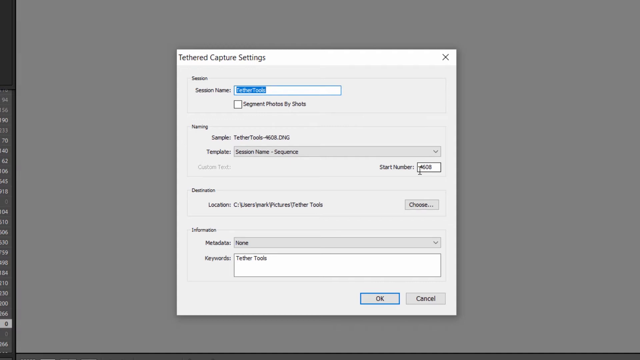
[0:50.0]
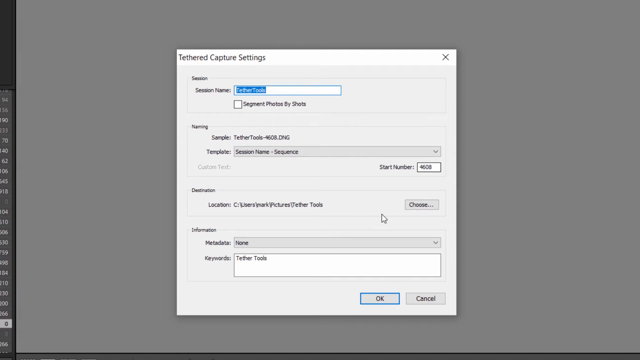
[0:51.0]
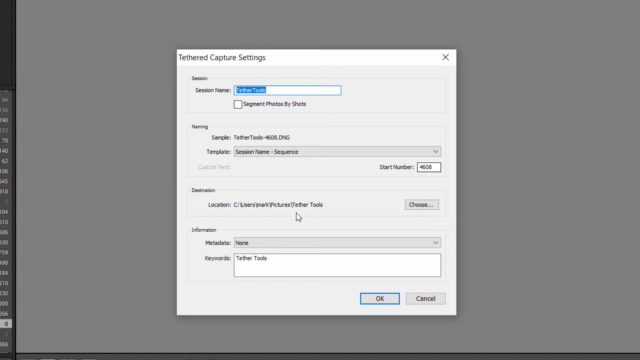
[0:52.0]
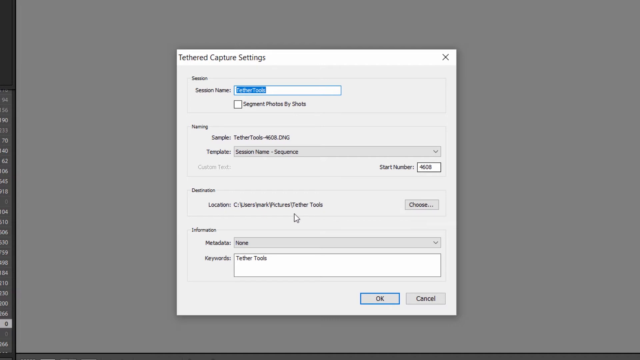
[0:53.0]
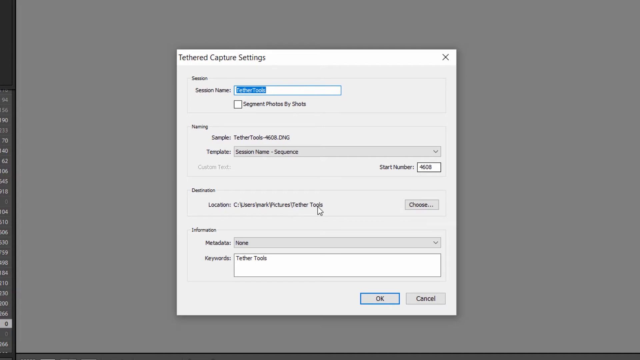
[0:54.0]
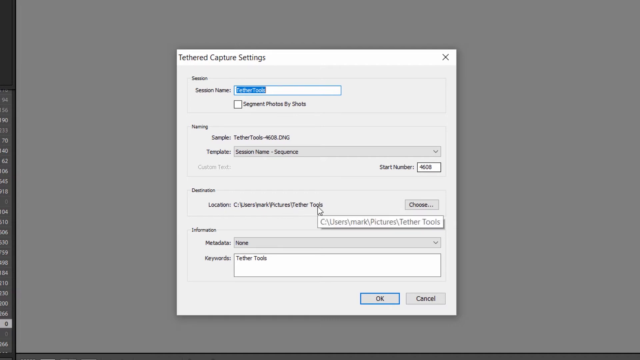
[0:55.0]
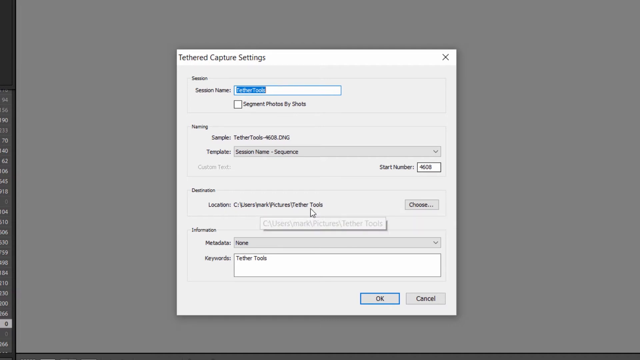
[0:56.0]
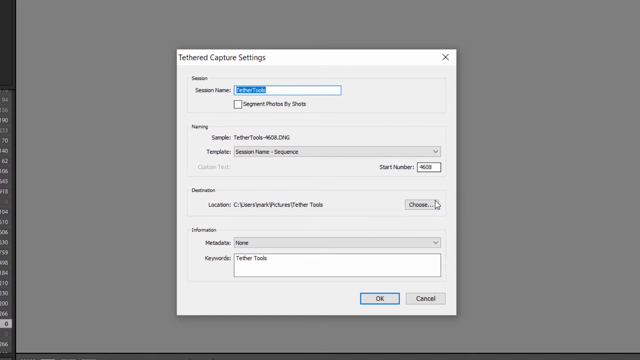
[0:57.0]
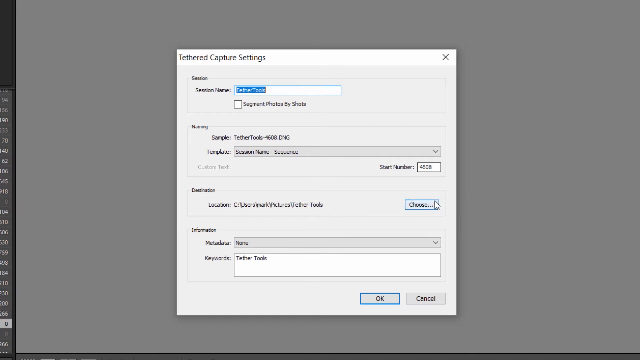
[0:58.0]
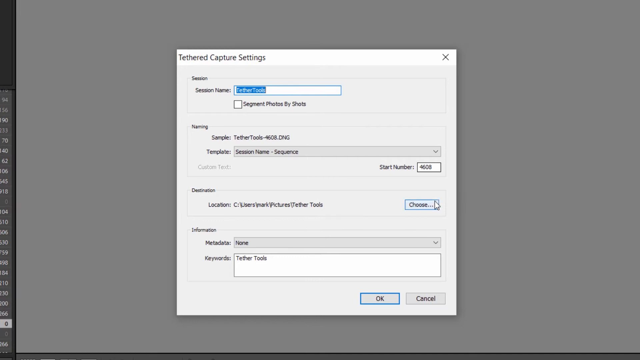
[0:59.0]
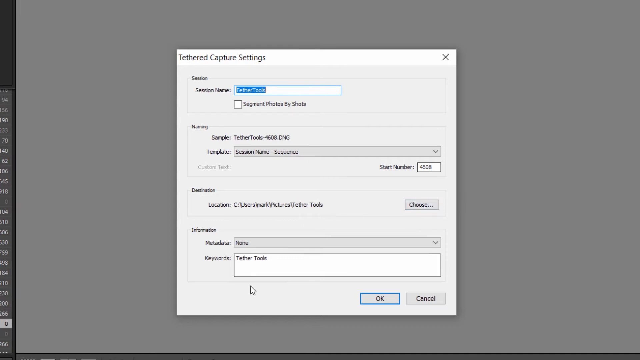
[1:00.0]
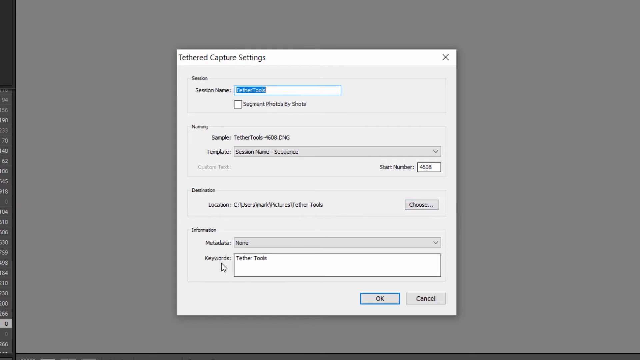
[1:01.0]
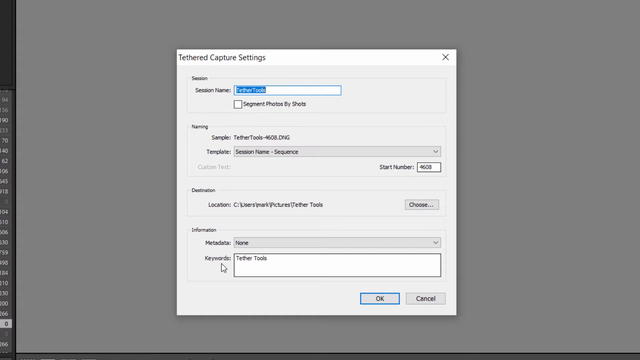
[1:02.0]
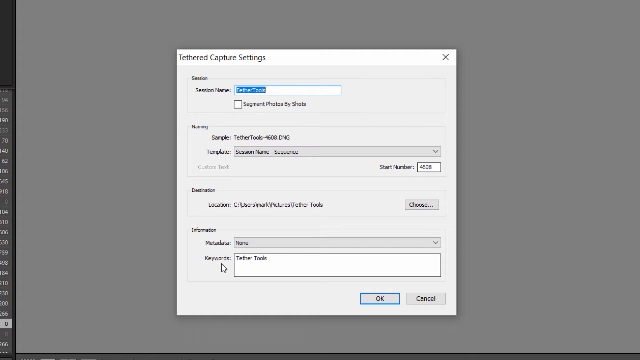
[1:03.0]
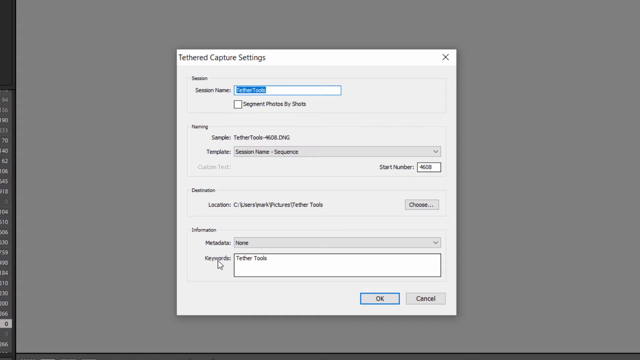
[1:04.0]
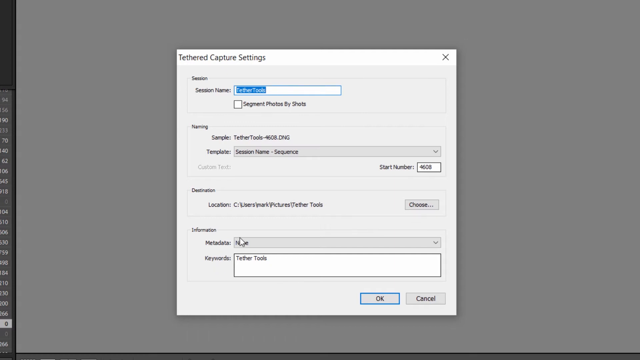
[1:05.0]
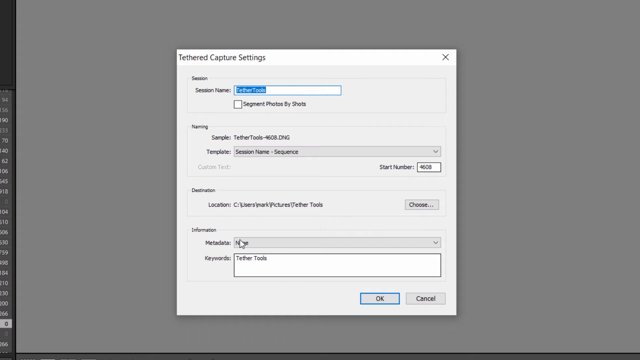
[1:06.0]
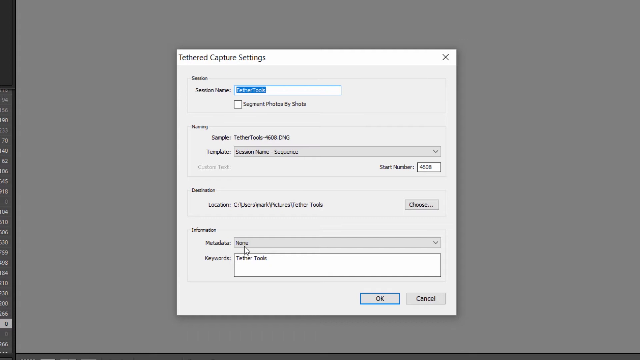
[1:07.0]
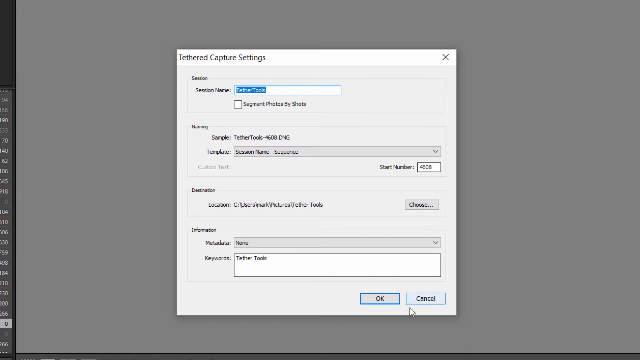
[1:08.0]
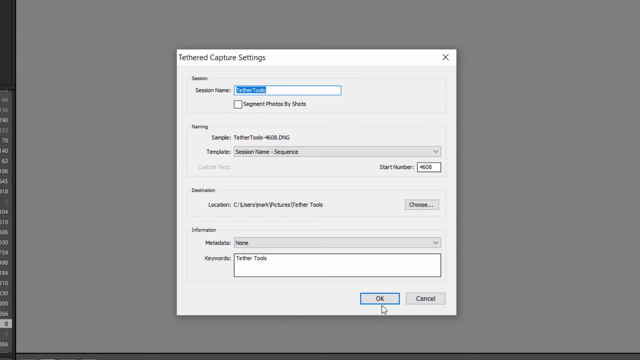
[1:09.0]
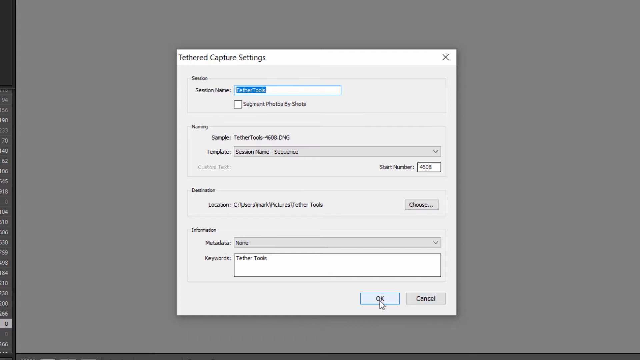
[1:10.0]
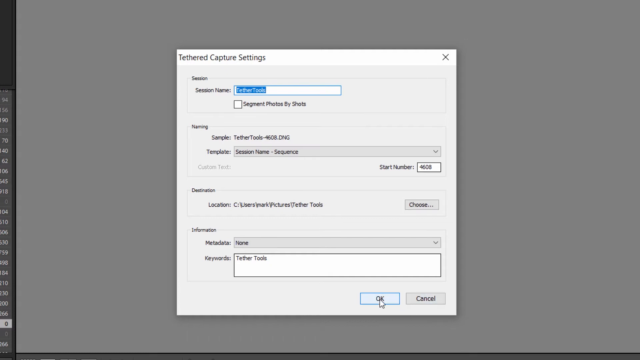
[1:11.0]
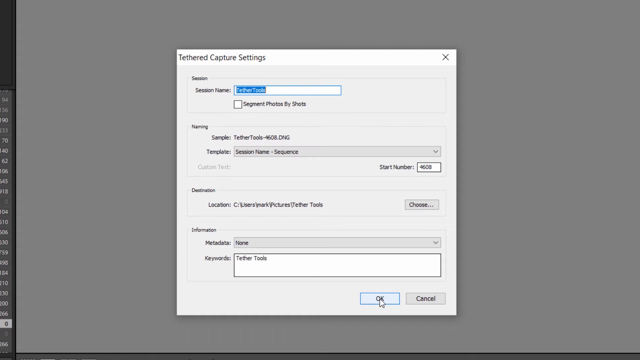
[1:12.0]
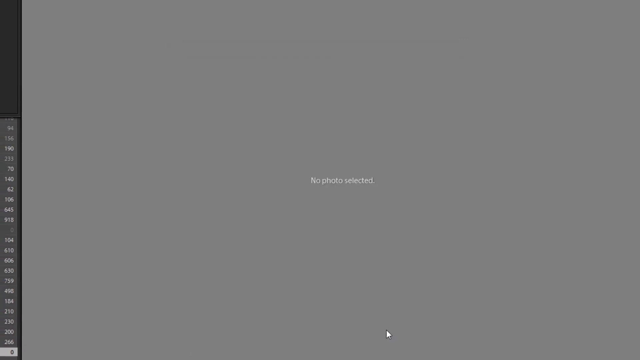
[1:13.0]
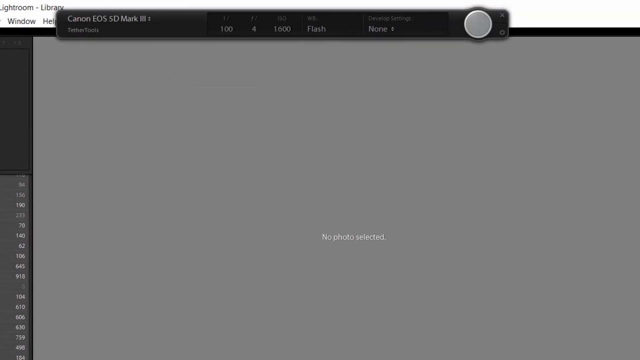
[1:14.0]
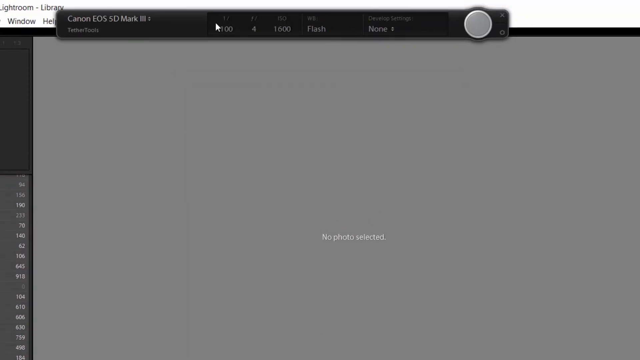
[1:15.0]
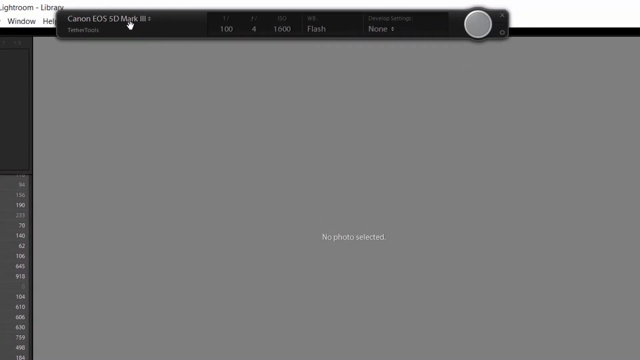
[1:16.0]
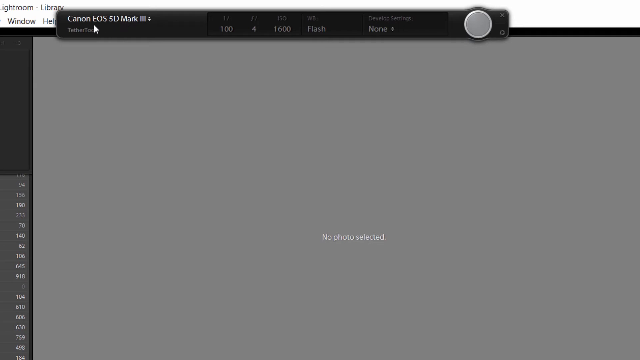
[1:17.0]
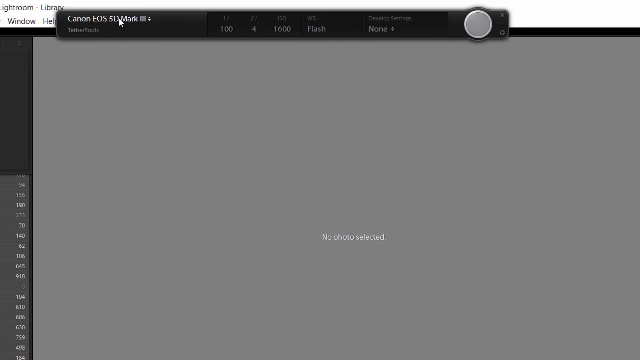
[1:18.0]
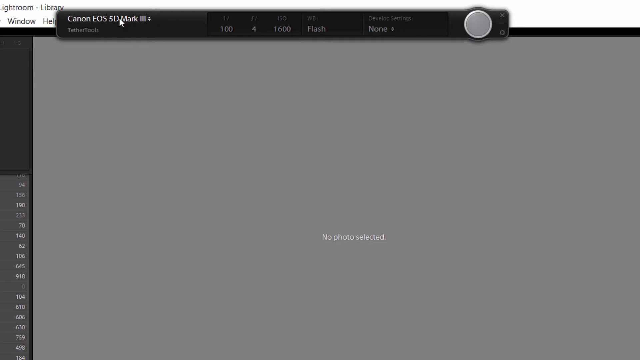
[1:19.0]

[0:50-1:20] The window that has appeared is titled "Tethered Capture Settings". Beneath it is "Session" and then "Session Name", and the text box next to Session Name contains the typed-in "Tethered Tools", highlighted in blue. Below that is a tick box labelled "Segment Photos by Shots". The next section is "Naming", where "Sample" has been filled in as "Tethered Tools". Under it are "Template" with "Session Name Sequence" and a start number of 4608. The destination below is in the location "Pictures" and "Tethered Tools". Further down is "Information" with "Metadata" and "Keywords"; there is no metadata, and the keywords are "Tethered Tools". The person clicks on "Choose" next to Destination, or hovers over it so it highlights blue, then scrolls the cursor down over various words such as "None", hovers over "OK" at the bottom and clicks it. This brings up a small window at the top reading "Canon EOS SD Mark Tethered Tools", with "Develop Settings" to the right-hand side.